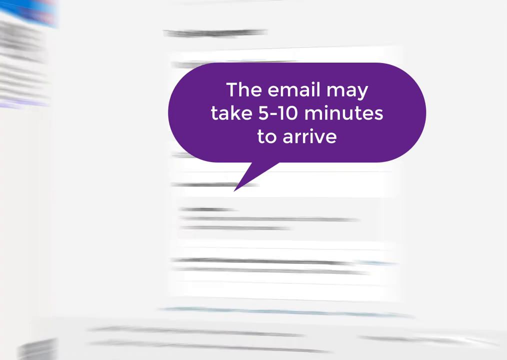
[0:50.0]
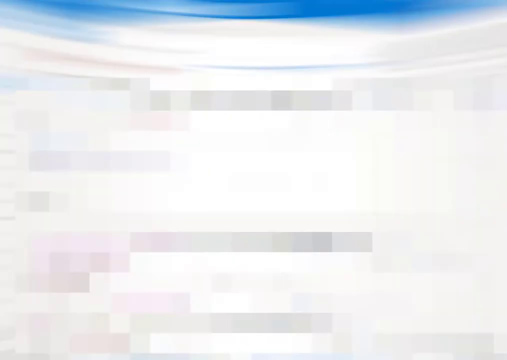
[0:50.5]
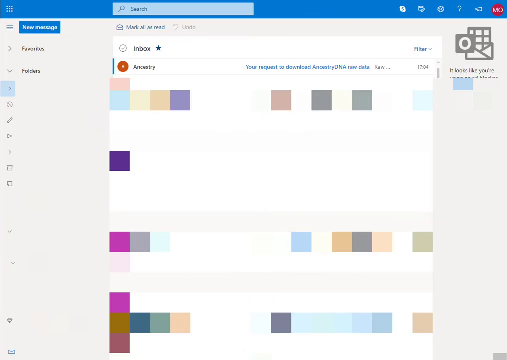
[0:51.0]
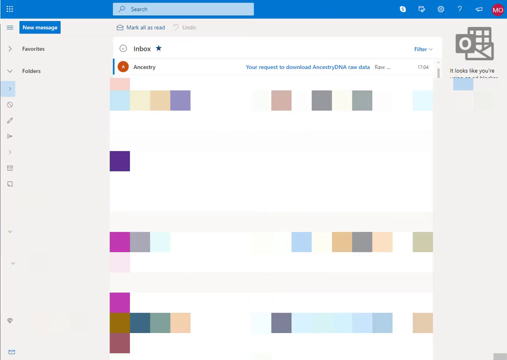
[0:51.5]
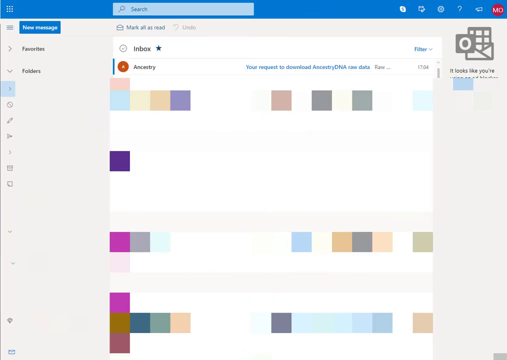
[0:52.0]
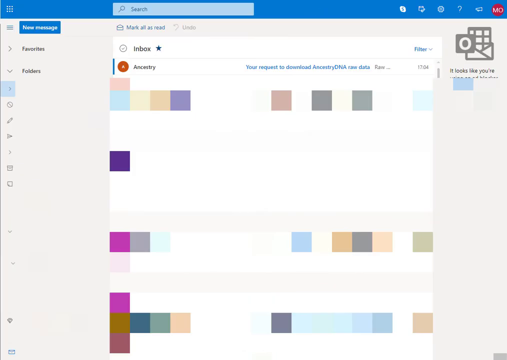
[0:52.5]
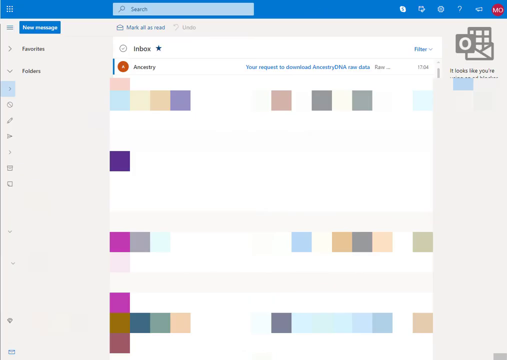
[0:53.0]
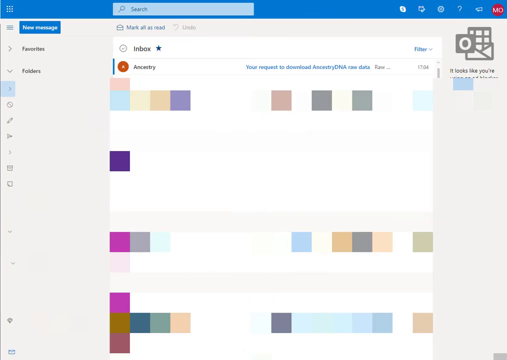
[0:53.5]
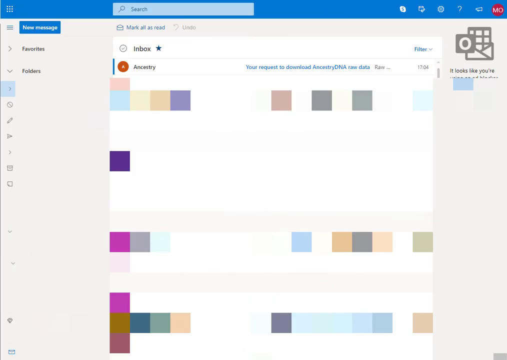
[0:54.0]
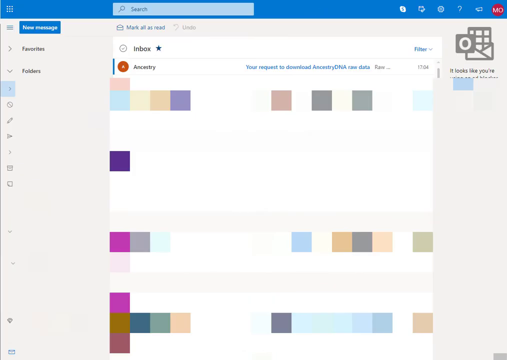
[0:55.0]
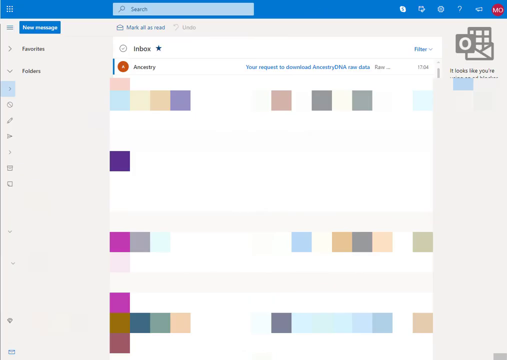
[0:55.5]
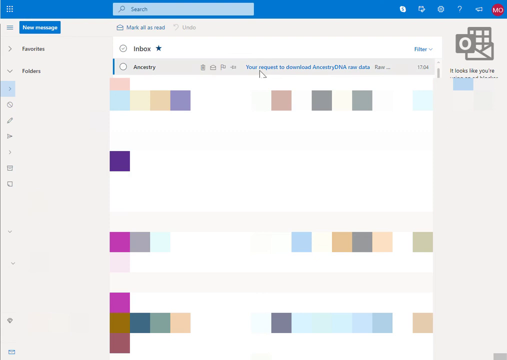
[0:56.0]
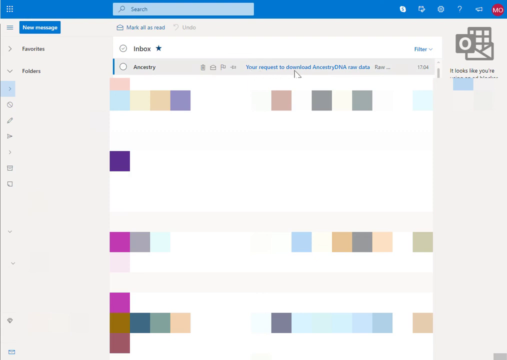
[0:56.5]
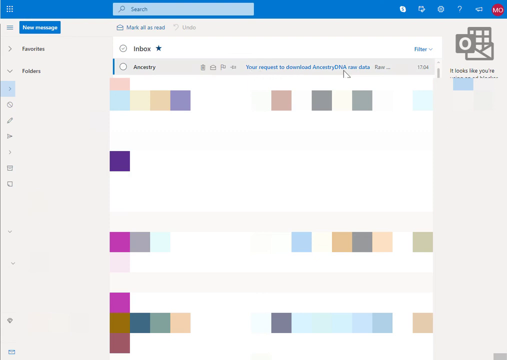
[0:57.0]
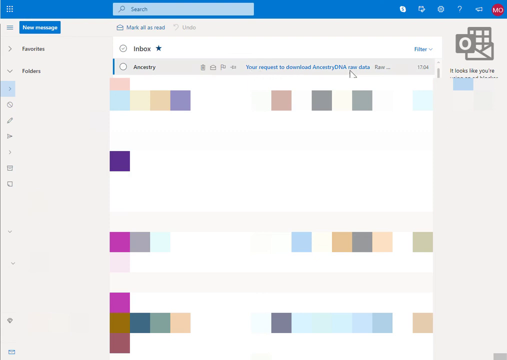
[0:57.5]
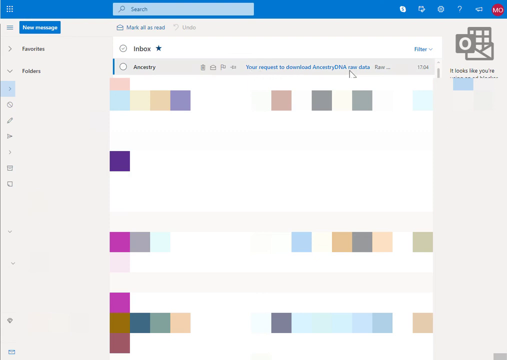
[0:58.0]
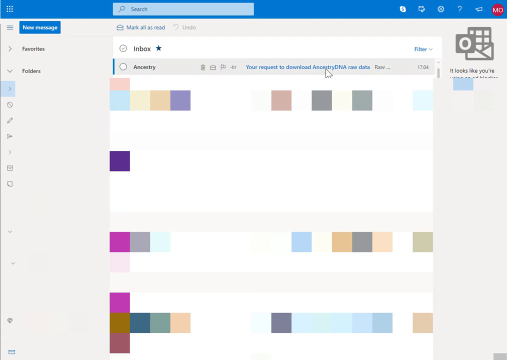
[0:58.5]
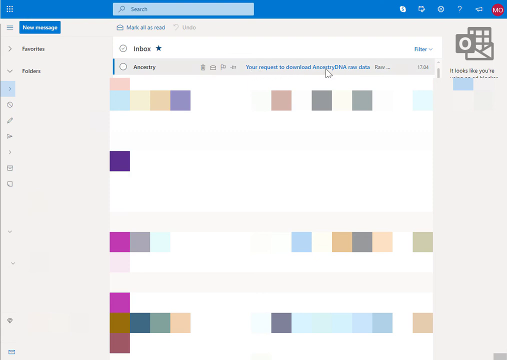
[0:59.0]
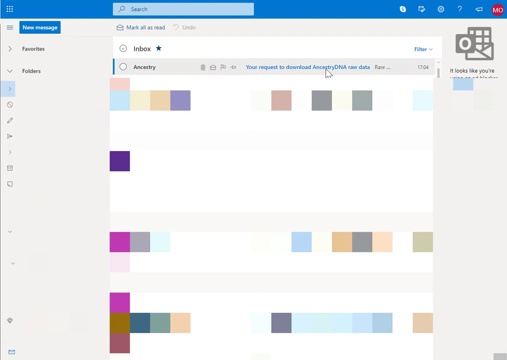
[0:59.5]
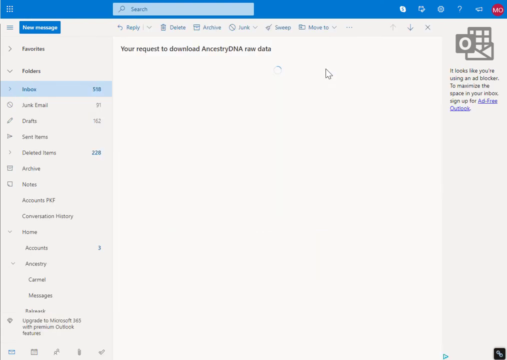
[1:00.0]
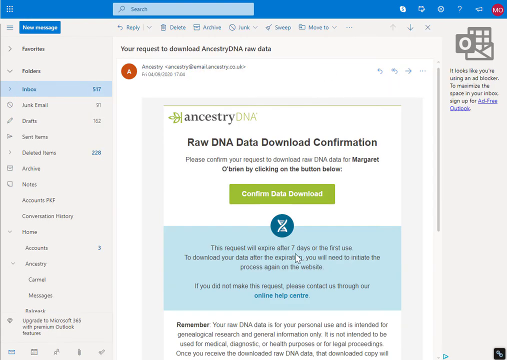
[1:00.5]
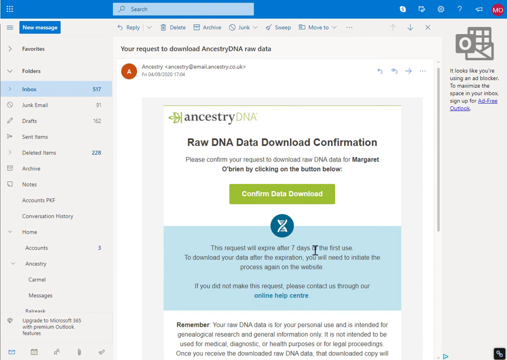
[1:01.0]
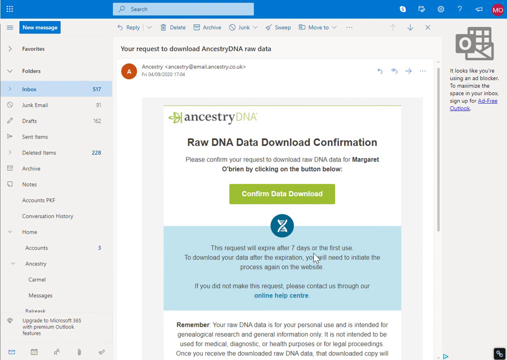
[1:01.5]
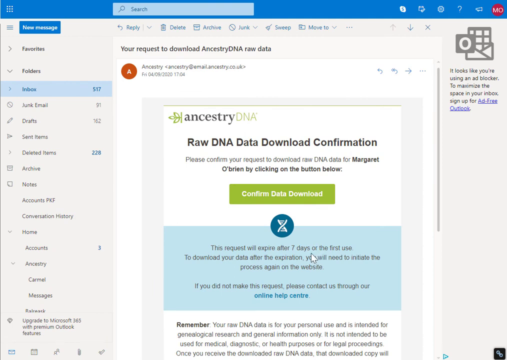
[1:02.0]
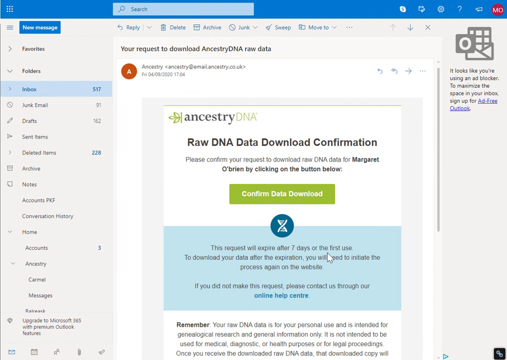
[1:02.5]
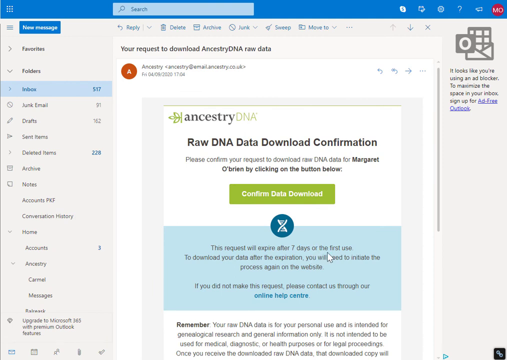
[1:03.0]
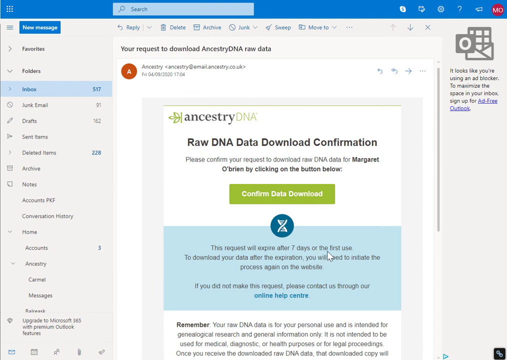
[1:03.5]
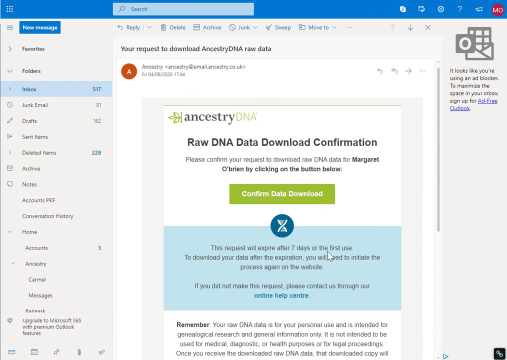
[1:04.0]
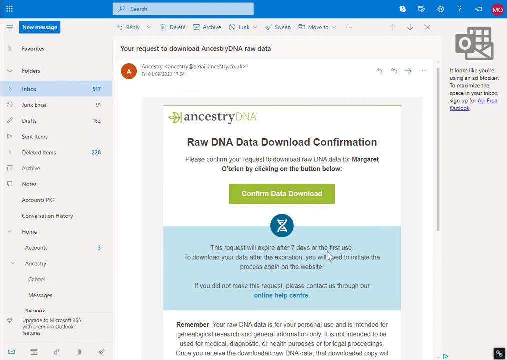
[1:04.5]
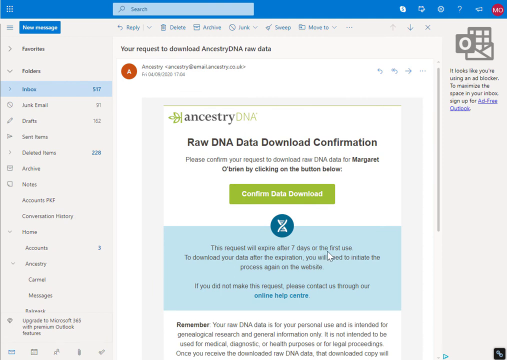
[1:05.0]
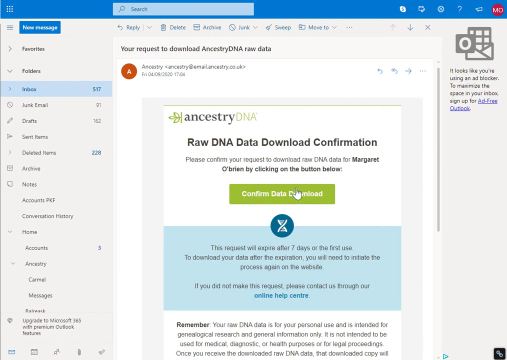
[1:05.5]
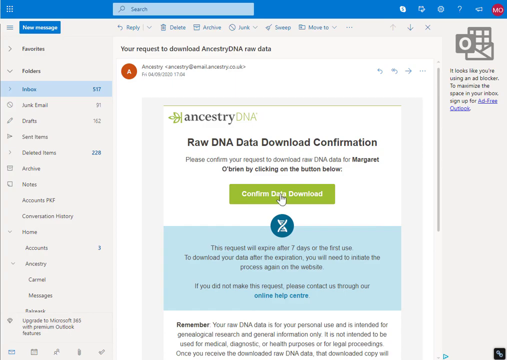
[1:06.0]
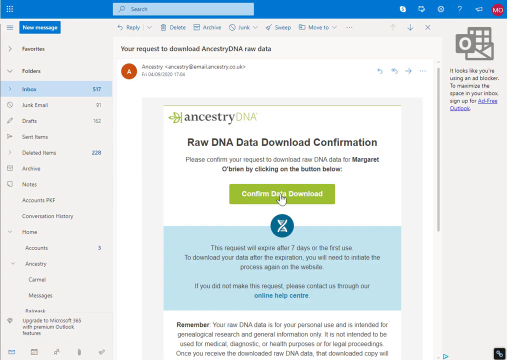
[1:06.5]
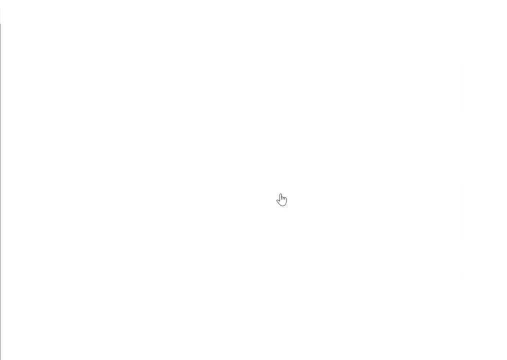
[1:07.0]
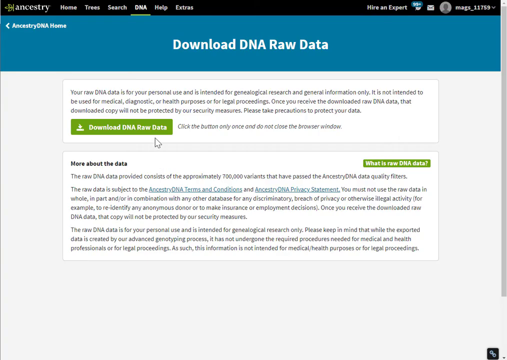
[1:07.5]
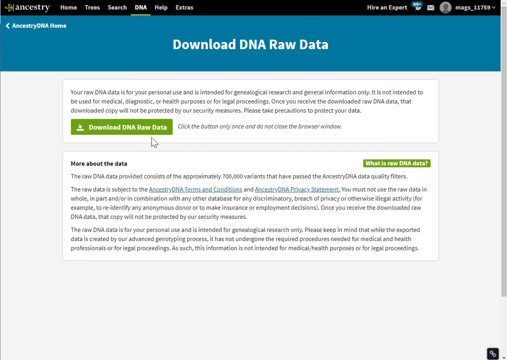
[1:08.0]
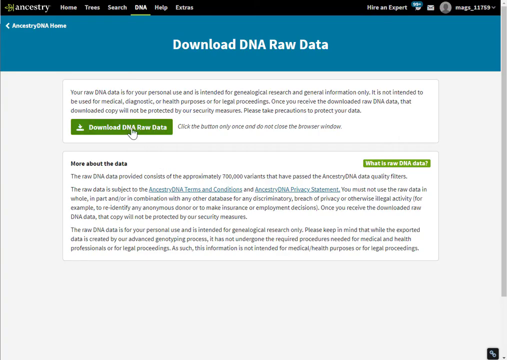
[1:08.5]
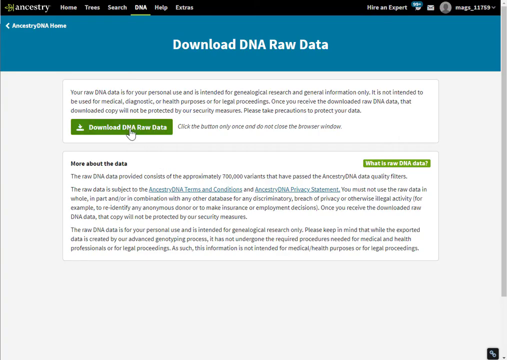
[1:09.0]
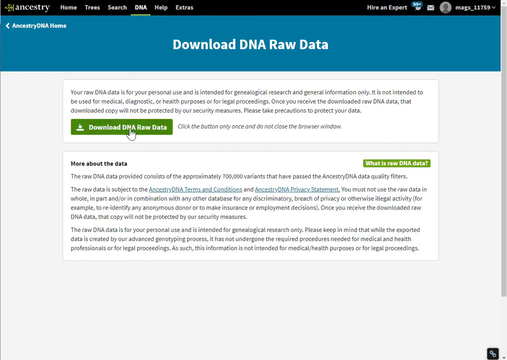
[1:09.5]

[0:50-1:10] A blurred animation appears to spin the page that was just open, with only a little text visible. Then an email inbox appears, with a blue bar at the top and a text field. At the far right is the user "mo"; to the left of that are a question mark and a circle with an S. Underneath is a column that is cut off, and there is an envelope with a grid coming out of it. Under the search field, at top center over the blue area, "mark all as read" appears in blue. The left-hand column has a new message button, favorites with a right arrow, folders to expand, and about five other options. They click the Ancestry item, and something pops up in blue that says "you request to download ancestry raw data." After going back and forth, they click it, and big bold text at the top says "you request to download ancestry." The Ancestry email shows the official logo with text, a green "confirm data download" button, and an hourglass at the bottom with text saying it expires after seven days. The arrow moves over the green confirm data button and clicks it, opening a page that describes the download and what it means for personal use, with a button for downloading the raw data, which they click.